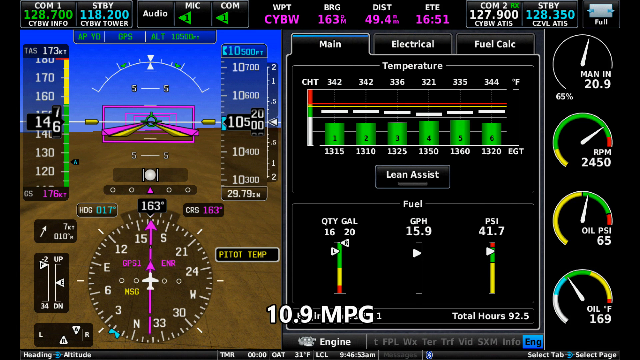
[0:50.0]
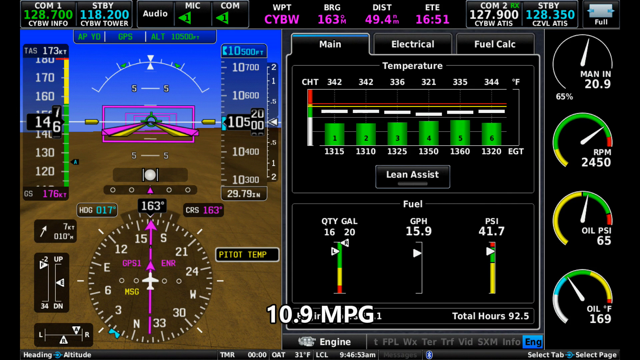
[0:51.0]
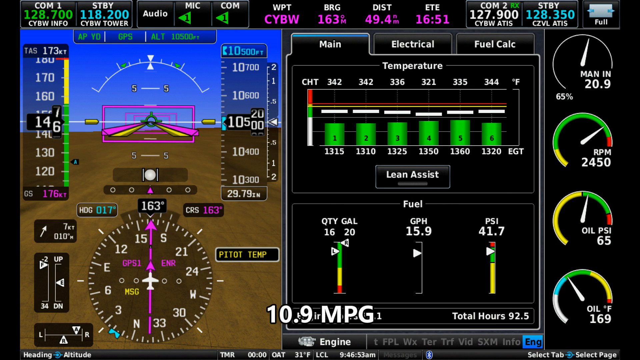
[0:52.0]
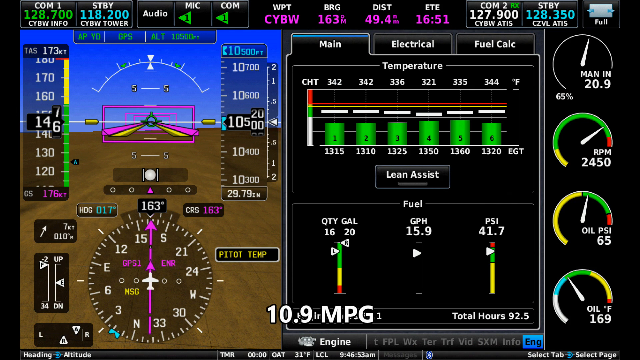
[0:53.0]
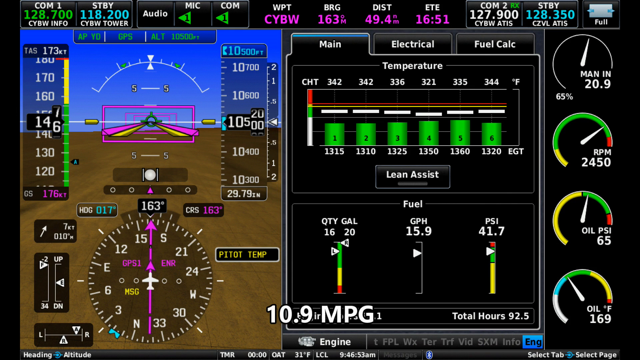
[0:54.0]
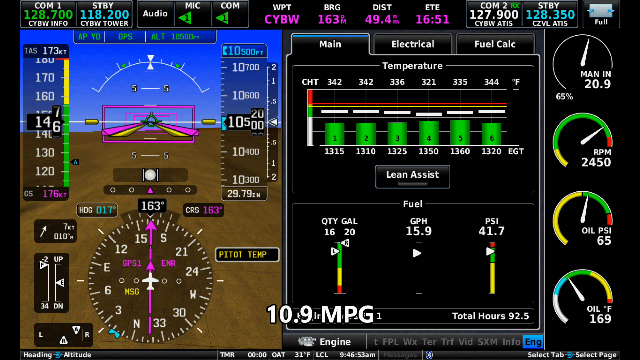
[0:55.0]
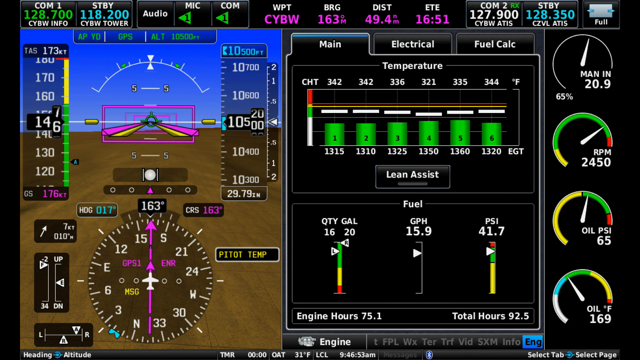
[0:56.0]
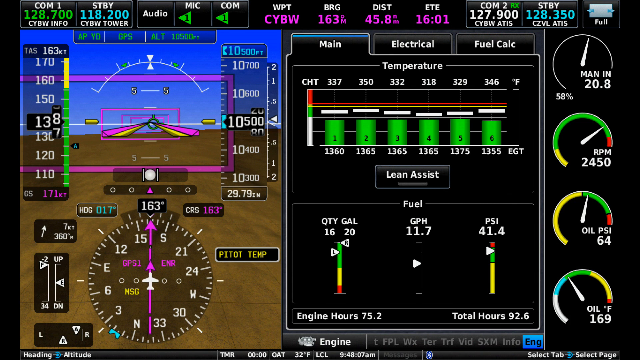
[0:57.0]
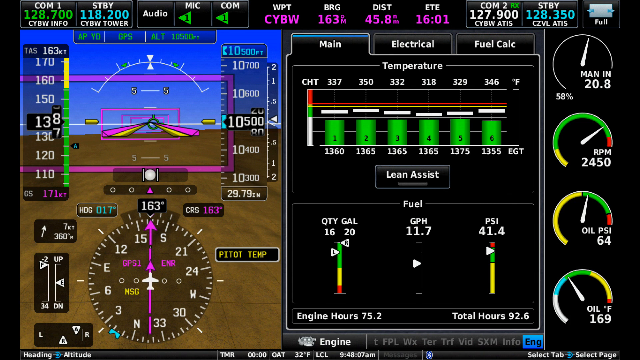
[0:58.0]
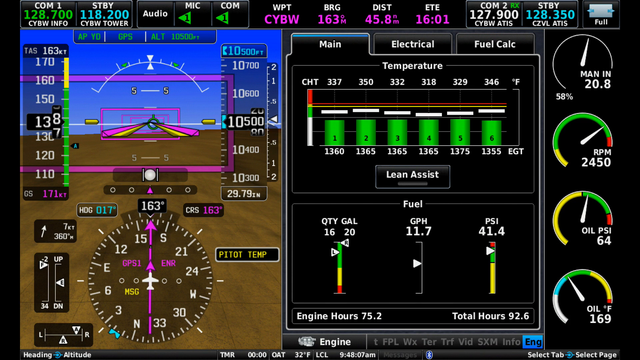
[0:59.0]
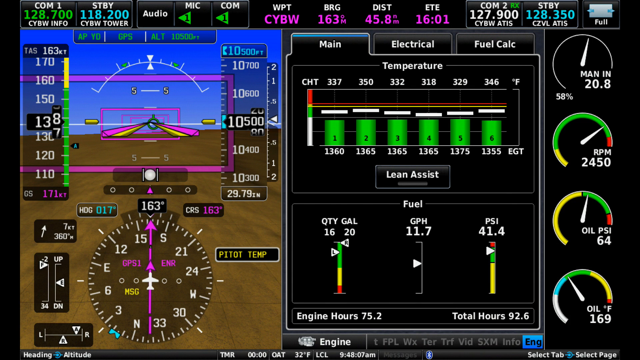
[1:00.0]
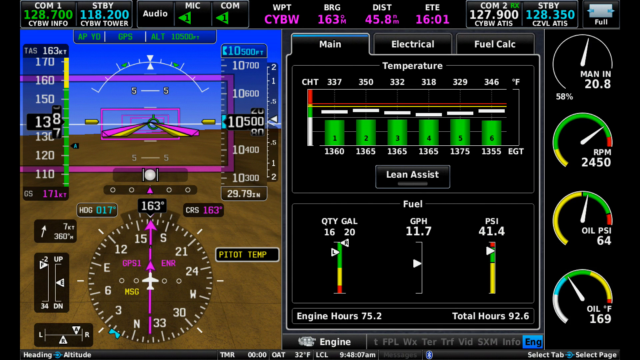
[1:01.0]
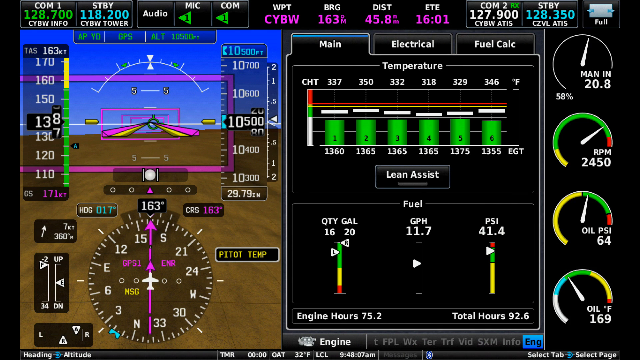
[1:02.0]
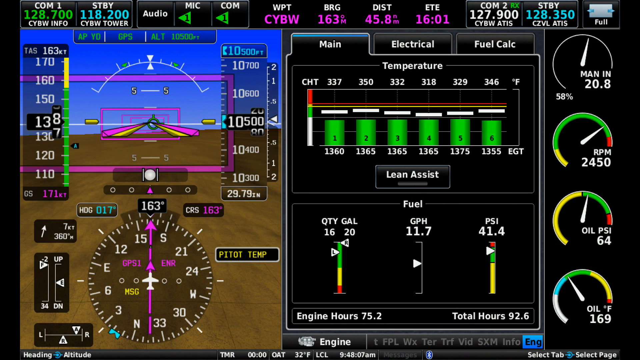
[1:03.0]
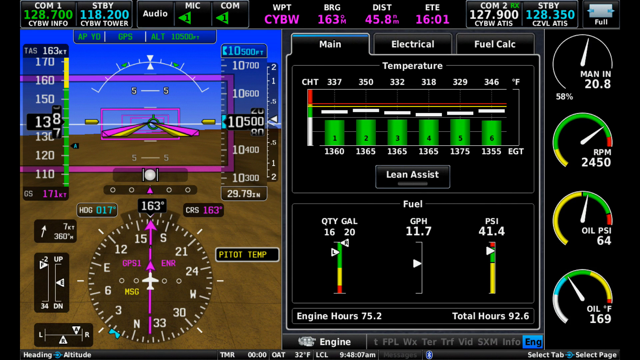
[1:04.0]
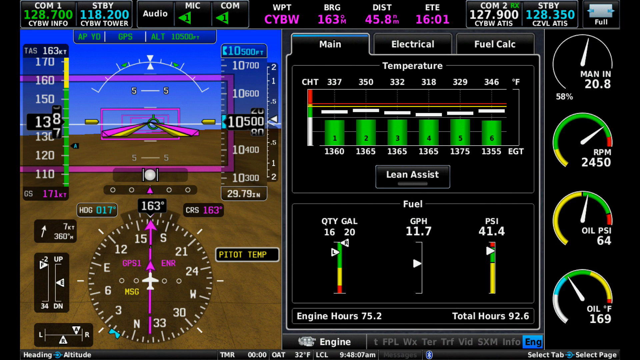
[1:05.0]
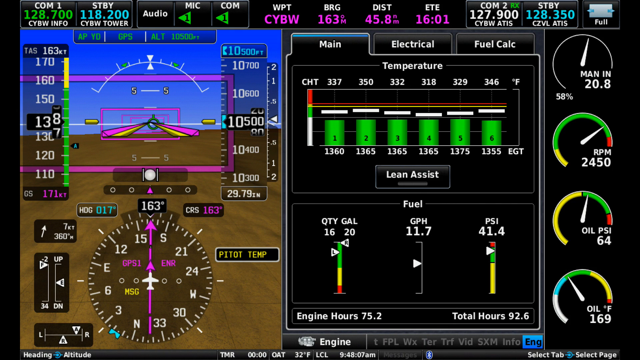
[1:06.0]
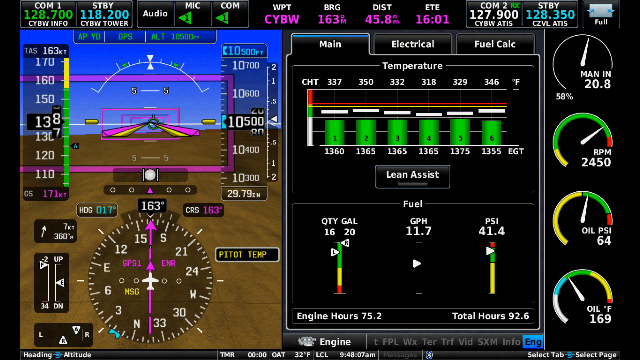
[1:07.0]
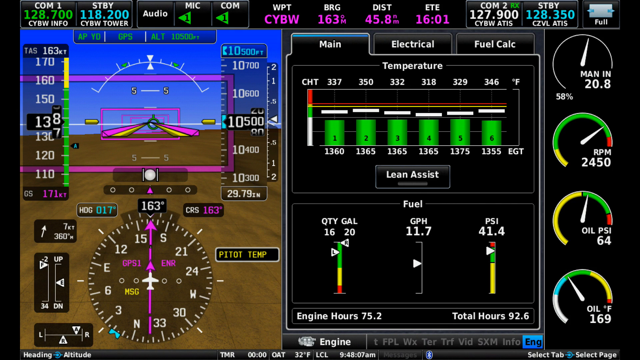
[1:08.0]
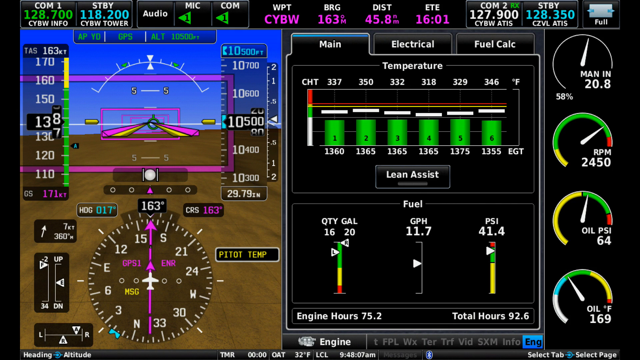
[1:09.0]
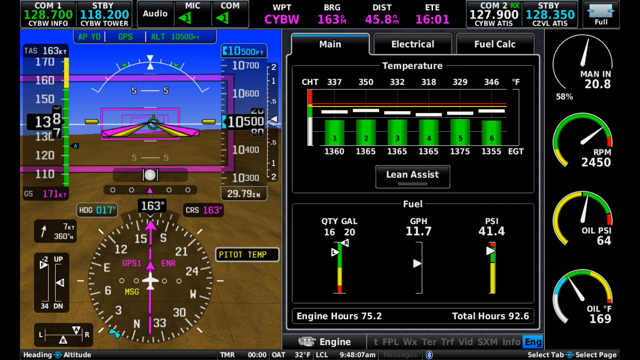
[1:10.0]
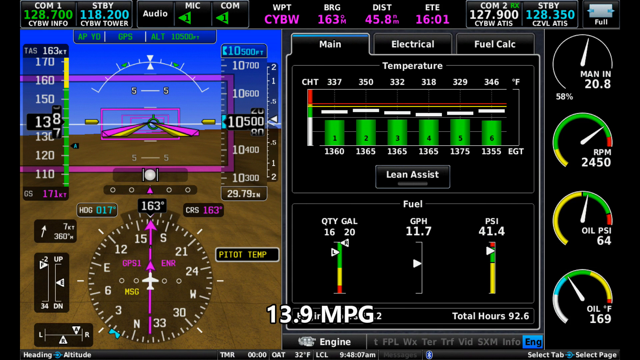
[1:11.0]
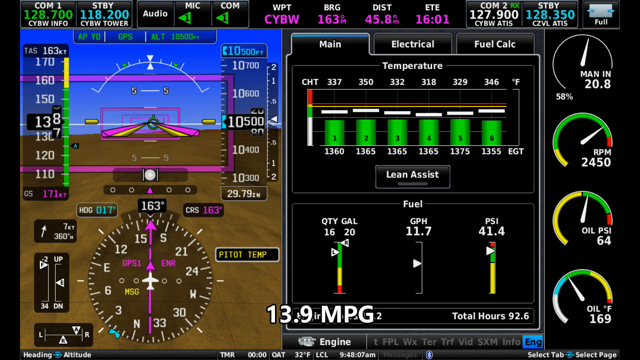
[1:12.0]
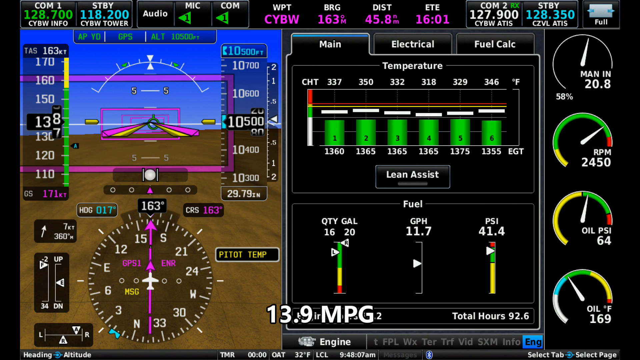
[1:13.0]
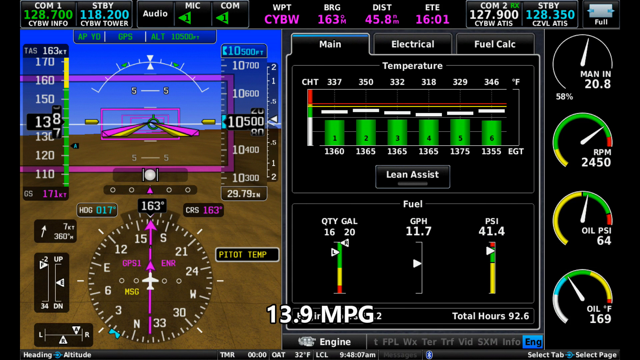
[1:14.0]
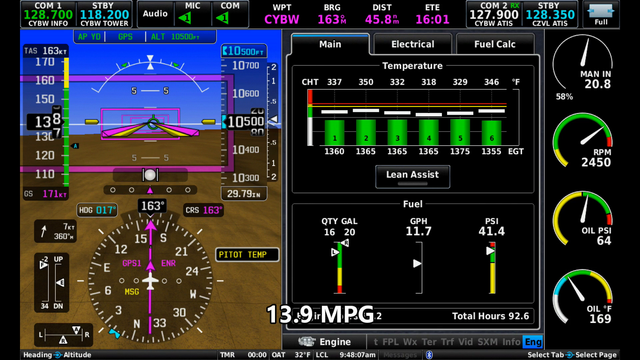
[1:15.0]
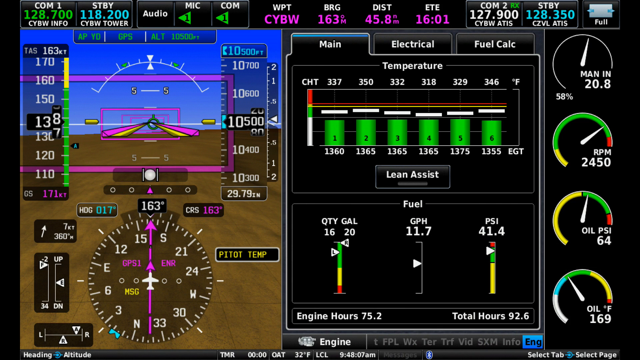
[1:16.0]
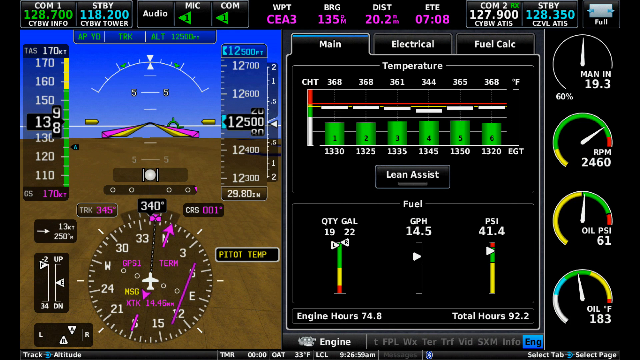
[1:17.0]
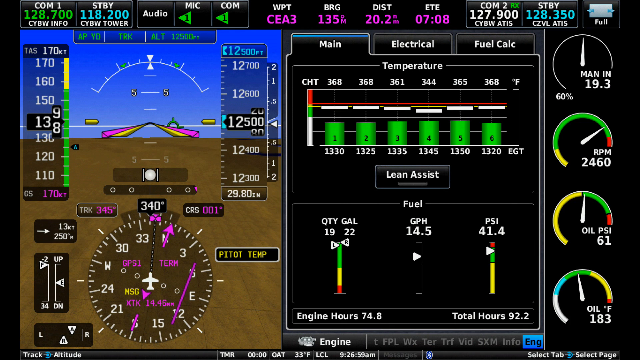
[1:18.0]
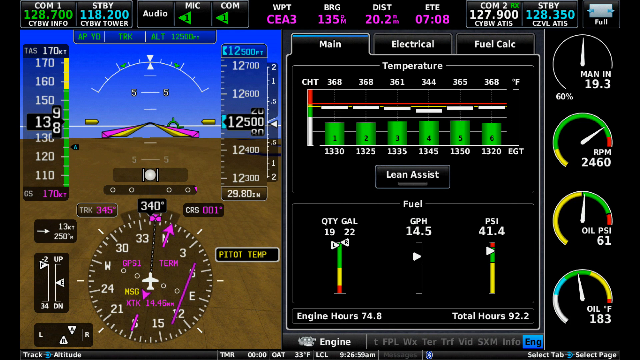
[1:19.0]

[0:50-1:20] A screen shows a black box on the right with text that says "main," "electrical," and "fuel calc." A temperature section has green cylinders numbered 1 through 6, with white text under each reading "1,315, 1,310, 1,325, 1,350, 1,360, 1,320, EGT." There is a small button that says "lean assist" and a fuel section reading "quantity, gal, 1620, fuel, gph, 15.9, psi, 41.7." On the right, what may be speedometers read "man in 20.9, 65%, RPM 2,450, oil psi 65, oil Fahrenheit 169." A screen on the left shows a lot of text, apparently tracking speed and distance as well as GPS information. A banner at the top reads "COM1, 128.700, CYBW info, STBY 118.200, CYBW tower, audio mic 1, COM1, WPT CYBW, BRG 163M, distance 49.4, ETE 1651, COM2 RX, 127.900, CYBW ATIS, STBY 128.350, CZBL ATIS," with a little box that says "full." White text on the screen says "10.9 mpg." The text goes off the screen, some information on the left side changes, and text appears that says "13.9 mpg" while the information on the left kind of changes slightly.